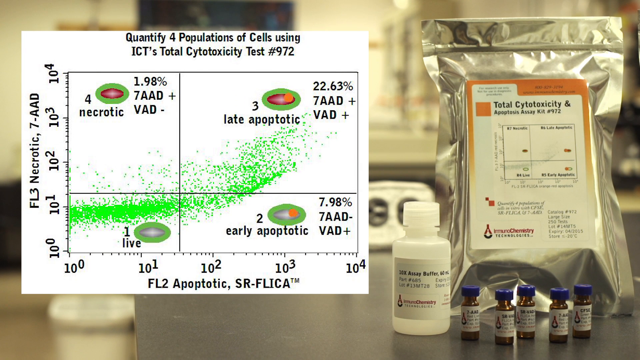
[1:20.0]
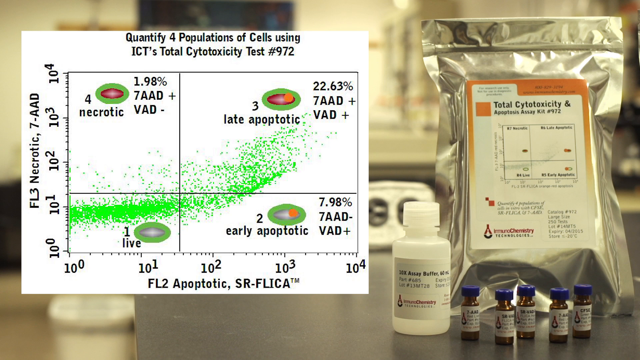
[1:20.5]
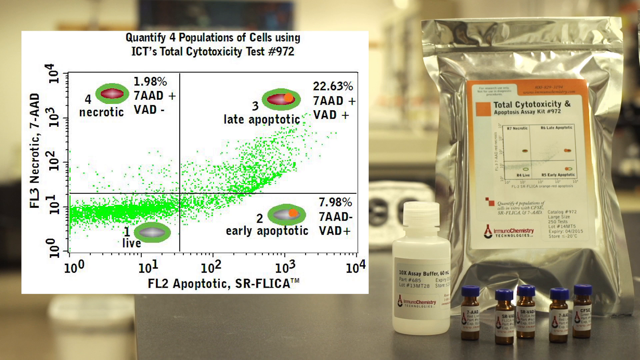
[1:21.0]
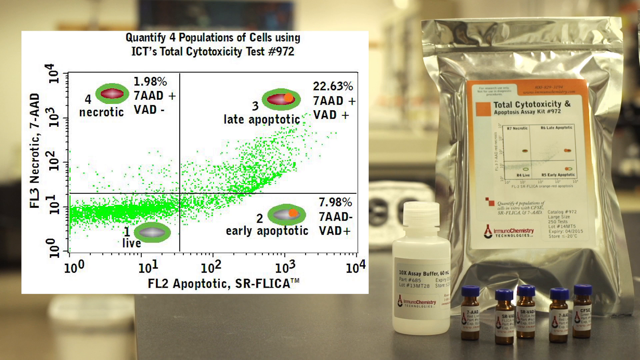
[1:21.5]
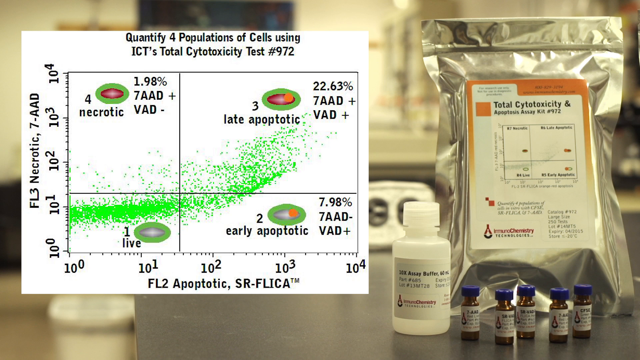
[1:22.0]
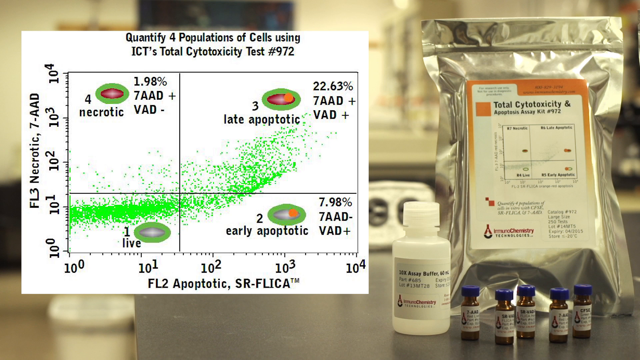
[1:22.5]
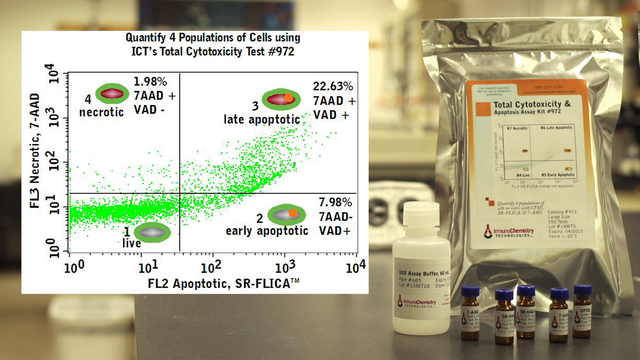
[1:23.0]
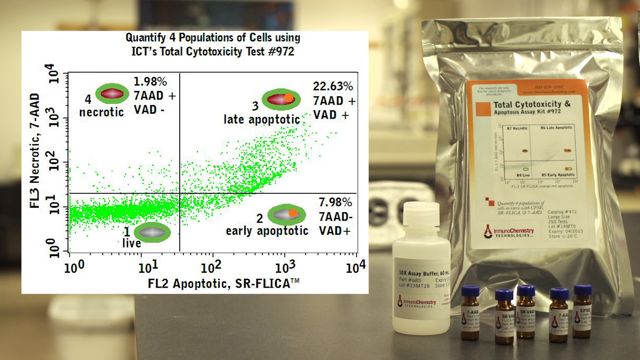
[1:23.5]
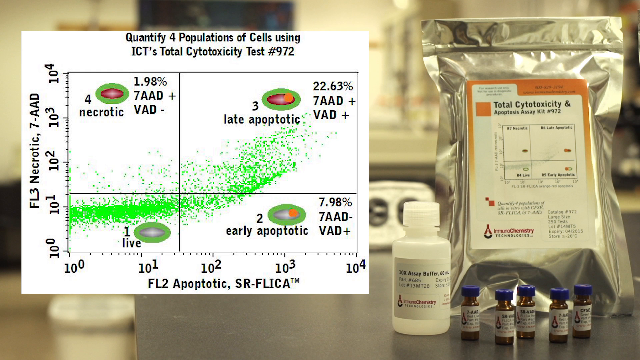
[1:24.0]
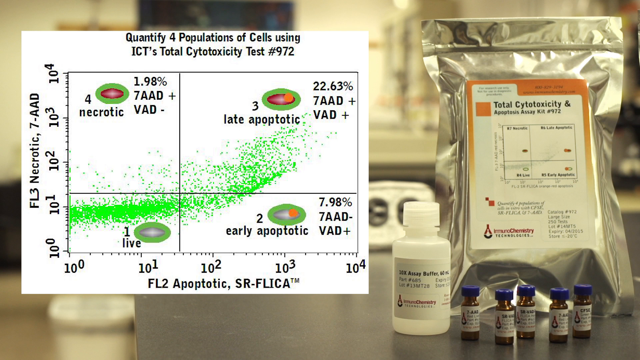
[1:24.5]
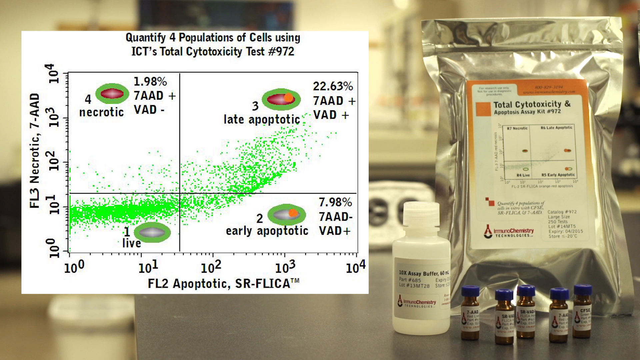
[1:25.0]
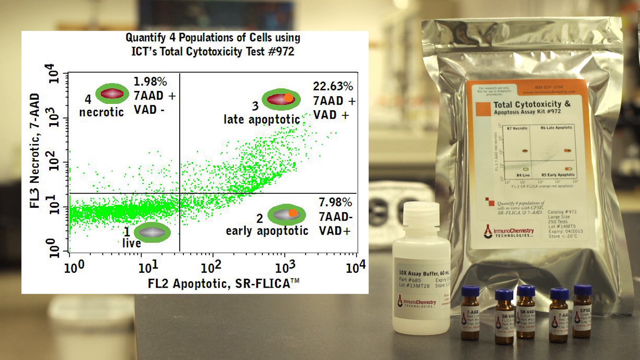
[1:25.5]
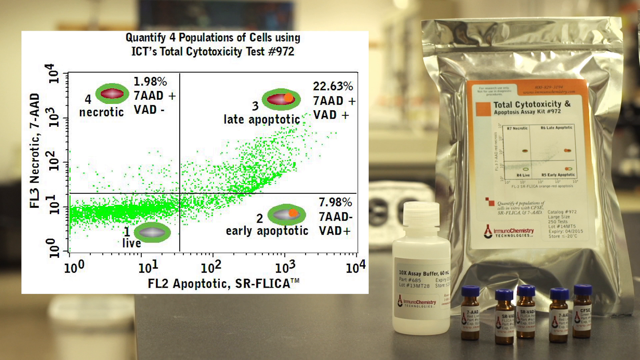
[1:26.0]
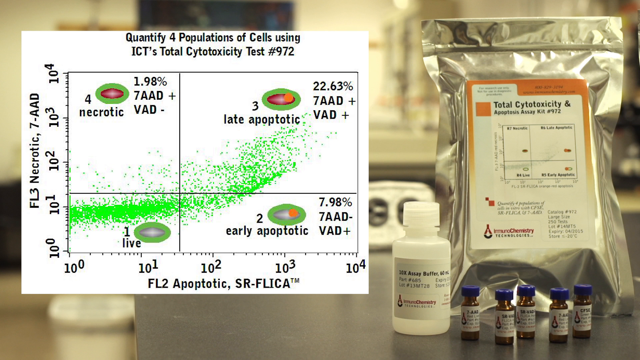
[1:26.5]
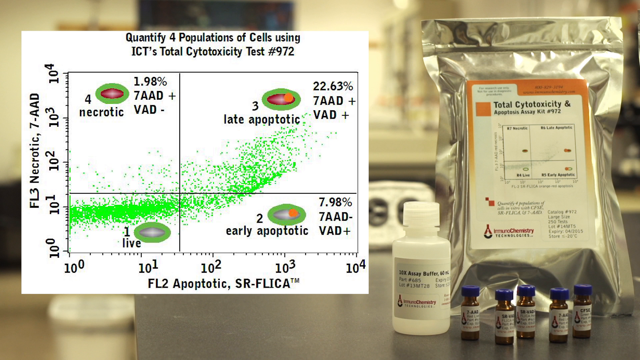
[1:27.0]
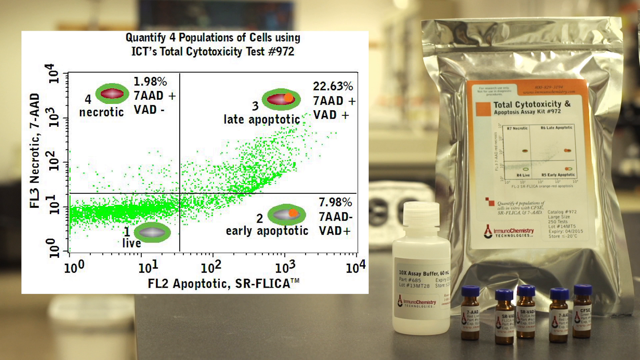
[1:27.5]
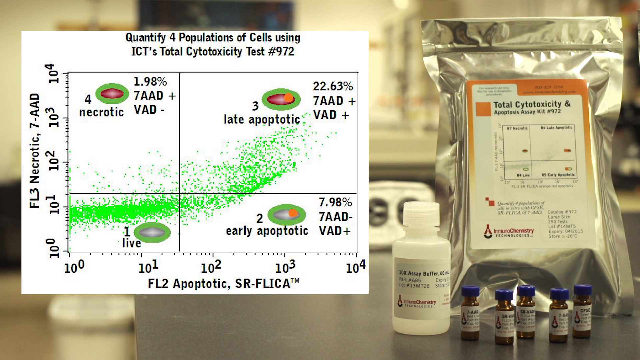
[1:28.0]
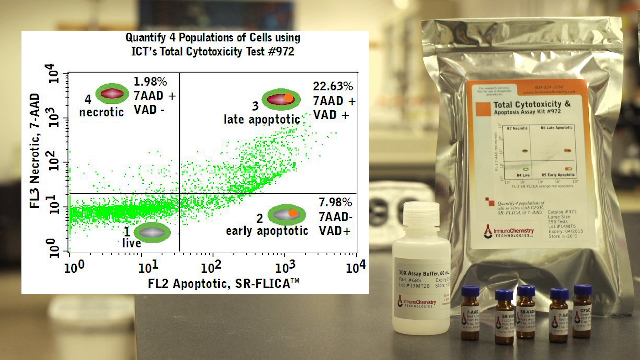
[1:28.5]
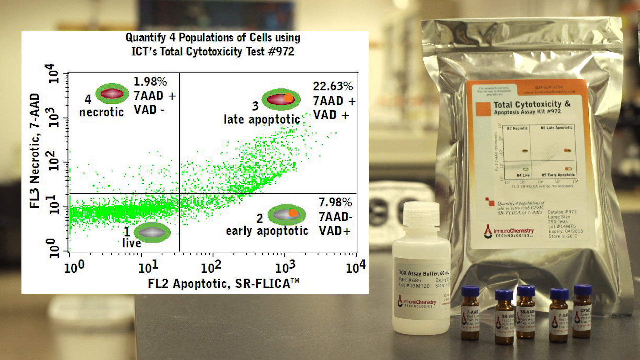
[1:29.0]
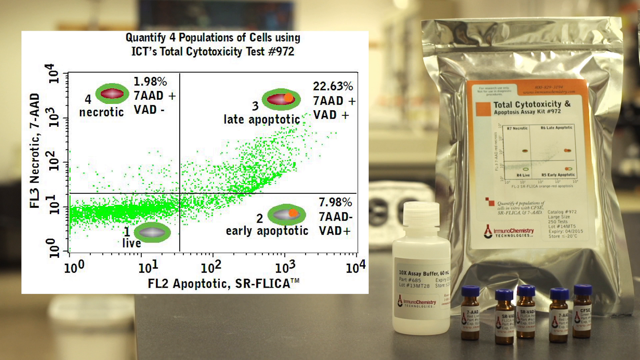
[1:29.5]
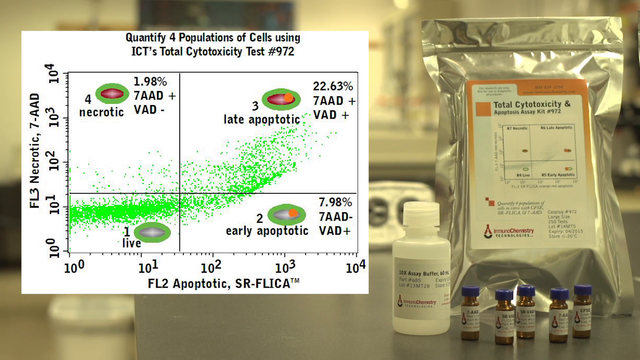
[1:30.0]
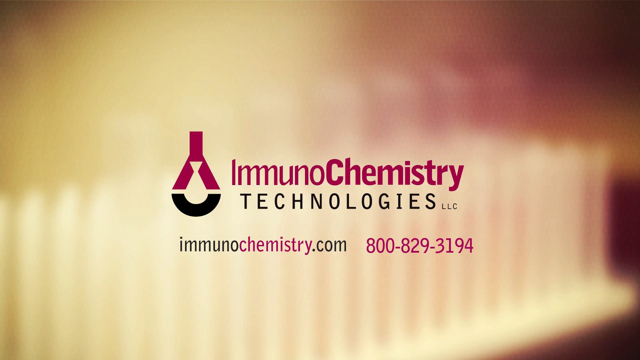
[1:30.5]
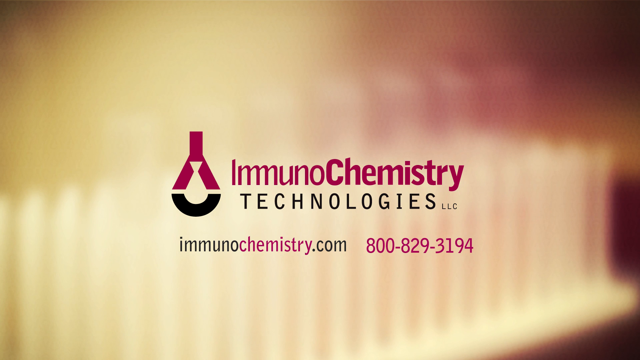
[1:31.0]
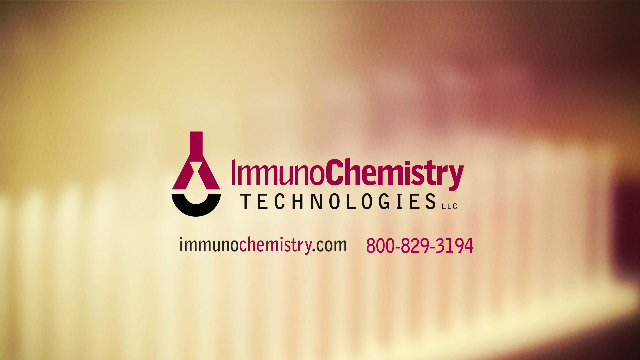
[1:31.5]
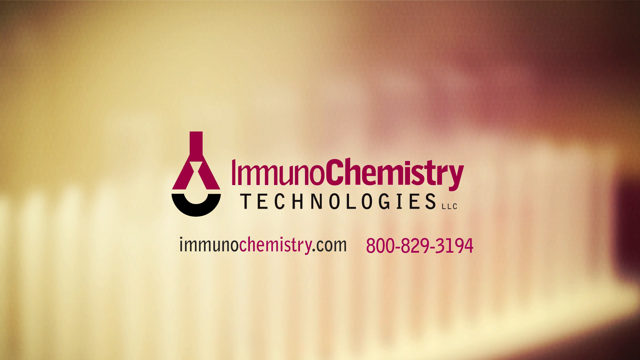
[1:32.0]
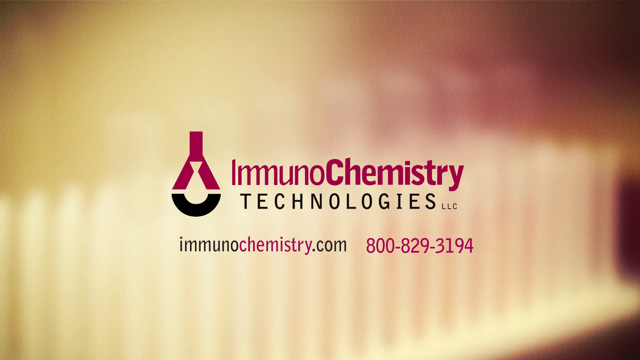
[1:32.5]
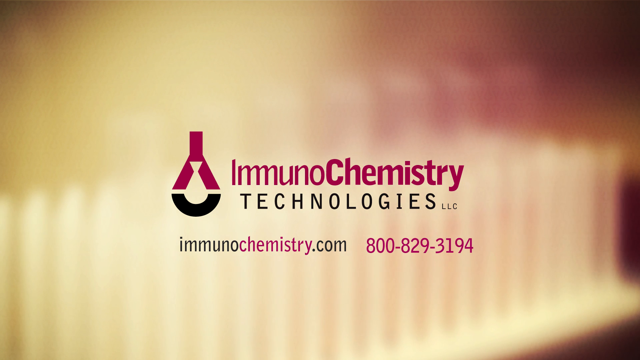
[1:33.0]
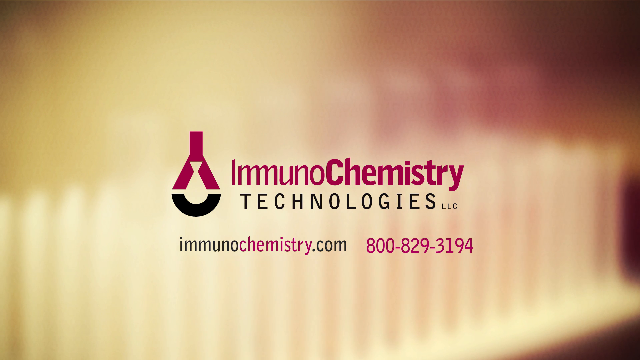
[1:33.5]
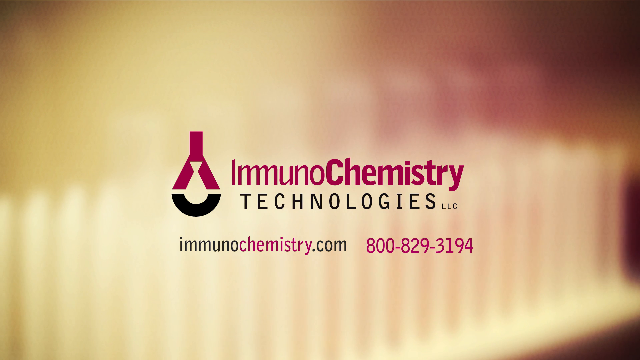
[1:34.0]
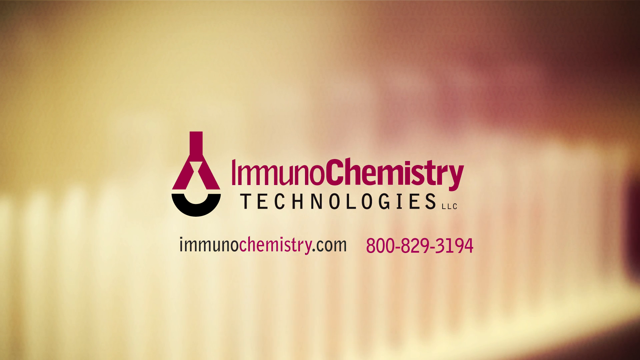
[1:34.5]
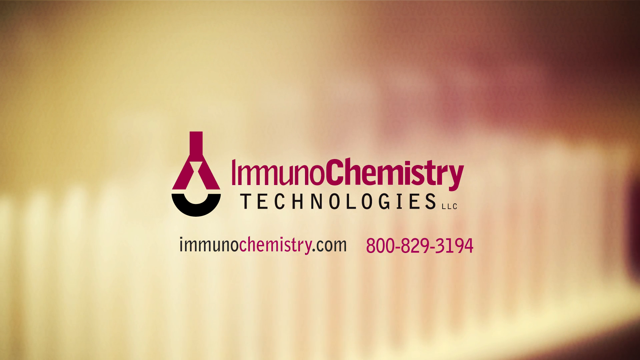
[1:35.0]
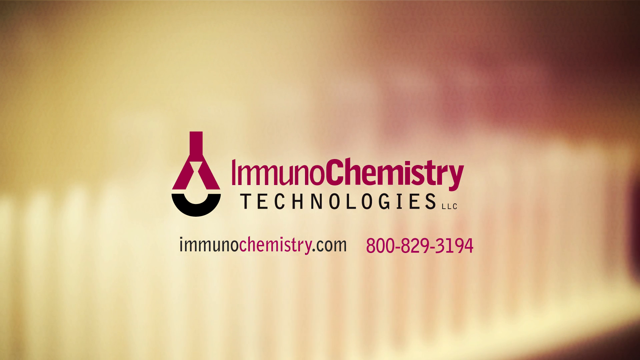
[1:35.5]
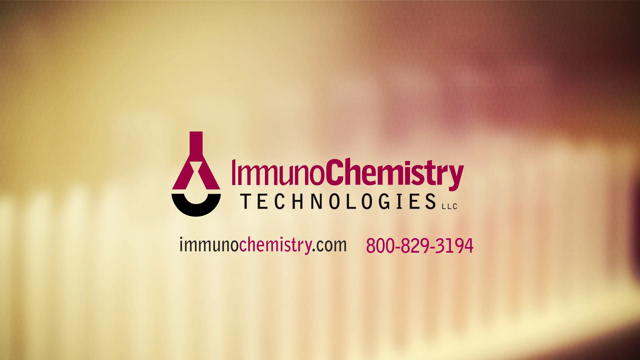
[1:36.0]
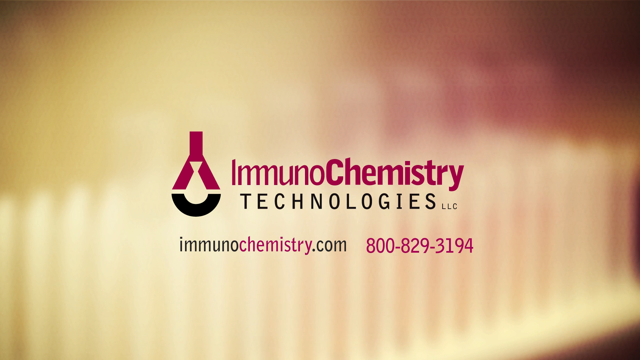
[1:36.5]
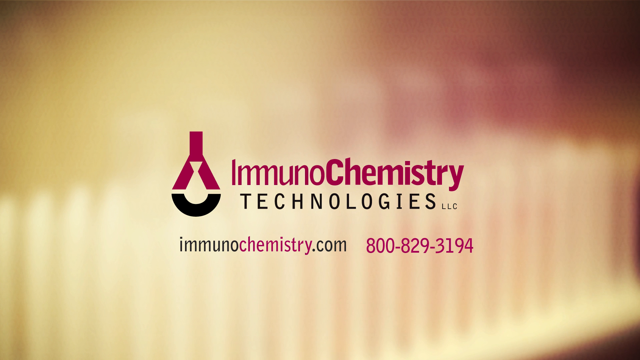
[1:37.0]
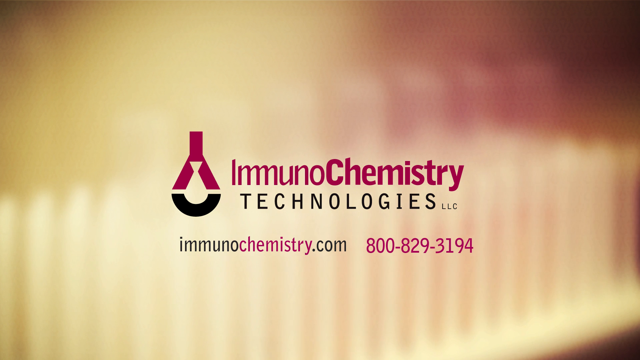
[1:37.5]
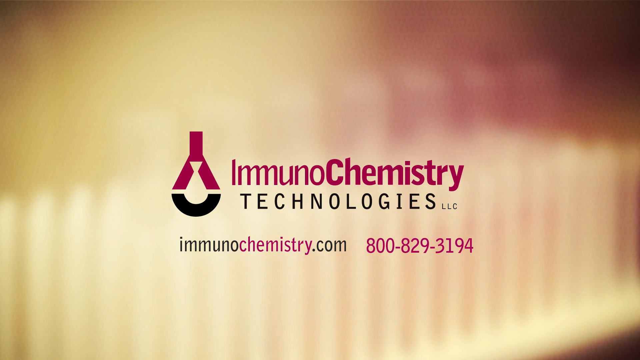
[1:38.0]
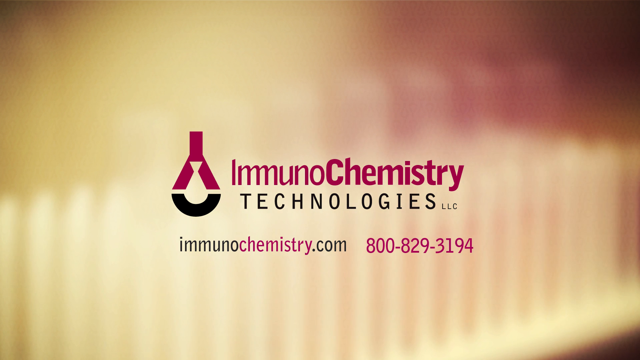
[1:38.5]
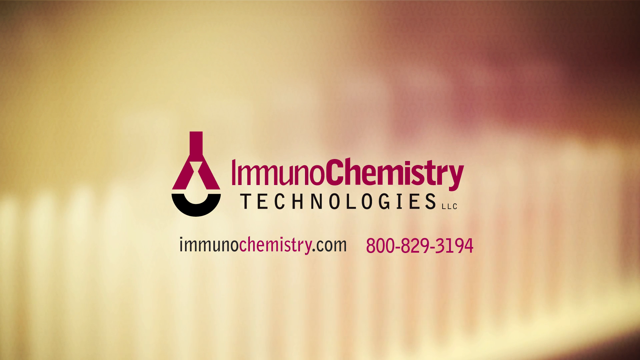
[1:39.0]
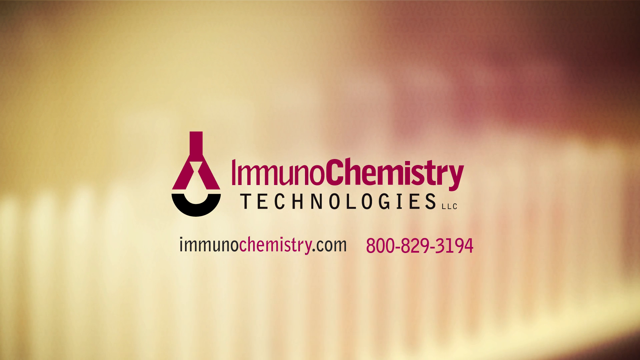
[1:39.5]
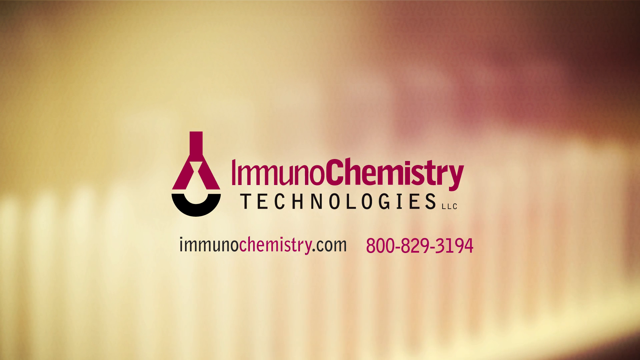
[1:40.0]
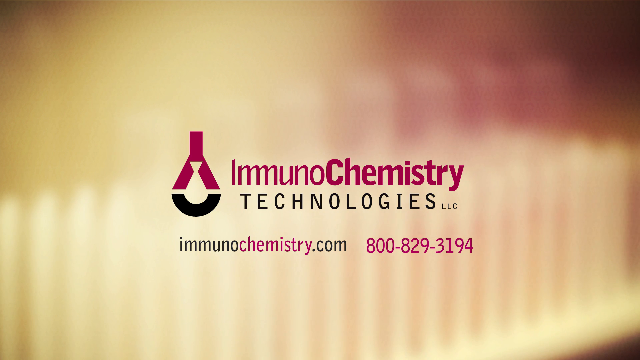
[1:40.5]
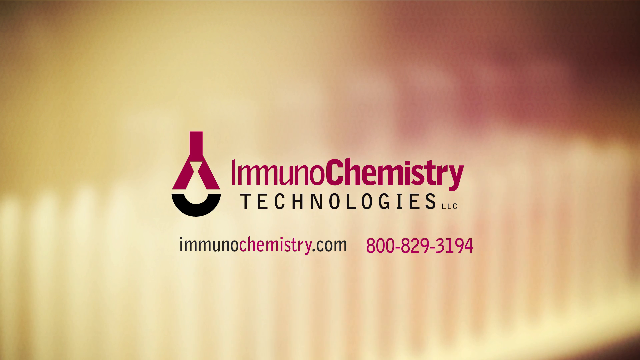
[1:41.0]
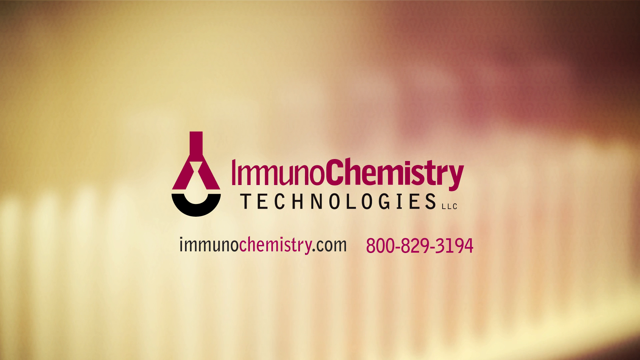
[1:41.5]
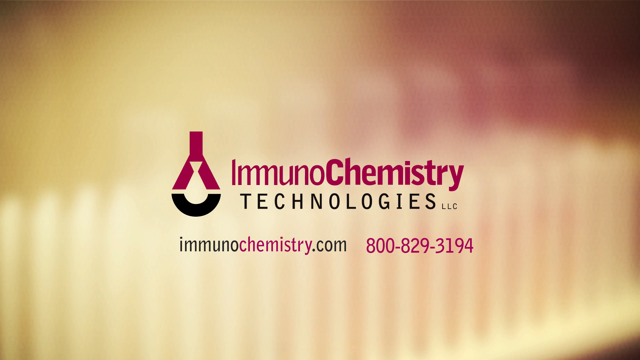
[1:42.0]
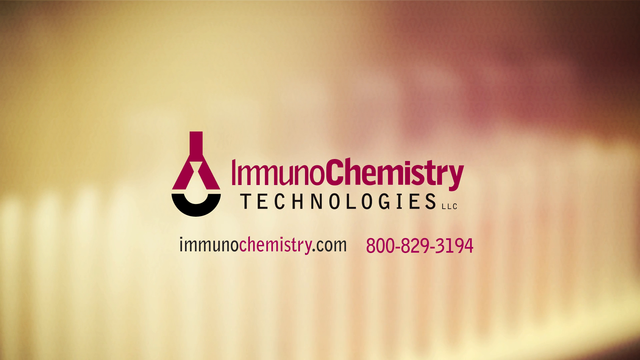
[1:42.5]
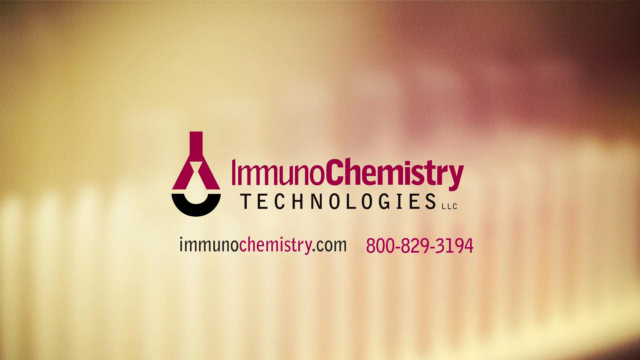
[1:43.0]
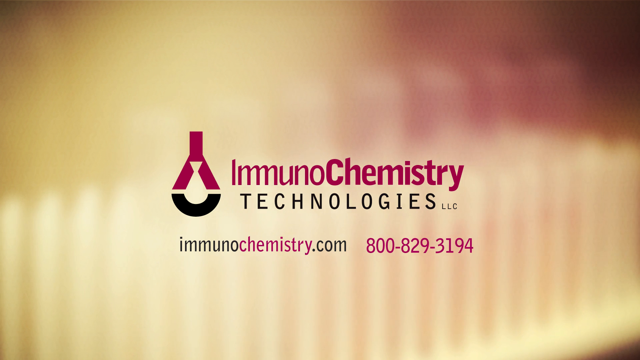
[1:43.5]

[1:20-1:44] A new screen shows the 7AAD substance in vials on the right: a large white container with a white screw top, several brown vials with blue screw-top lids in the lower right corner of the screen, and a larger package holding the products, apparently the final packaging. On the left is a readout, apparently showing the purity of the substances in the vials and containers. The top line of this readout says "quantify four populations of cells using ICTs total", and there is a test number 972. The readout on the left is apparently what is printed on the front of the silver packaging.